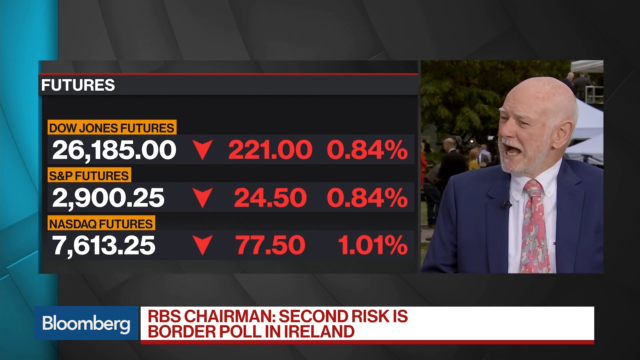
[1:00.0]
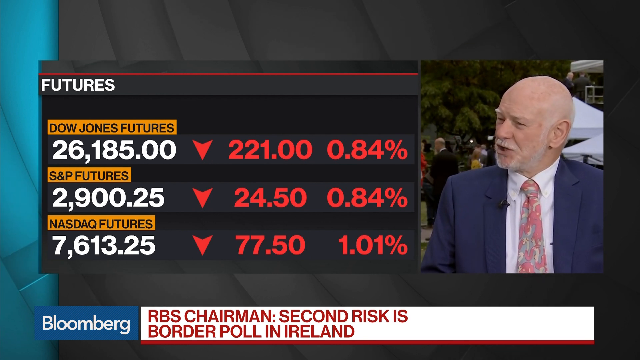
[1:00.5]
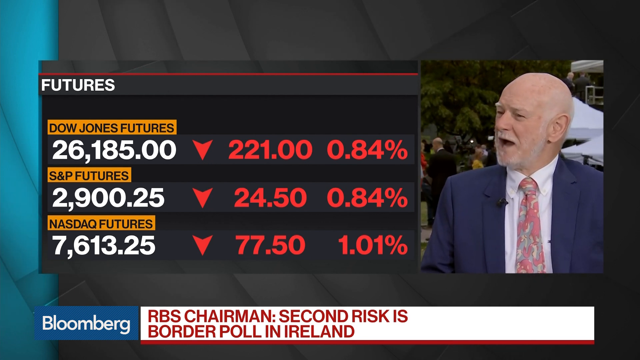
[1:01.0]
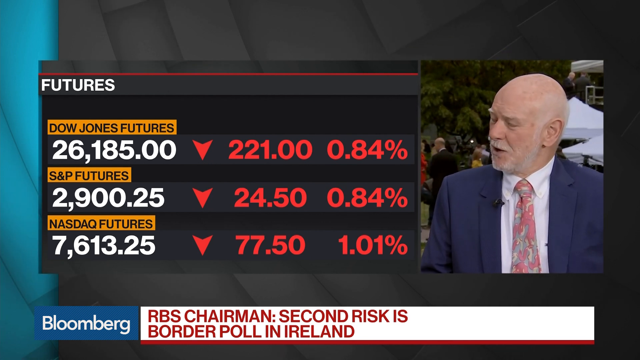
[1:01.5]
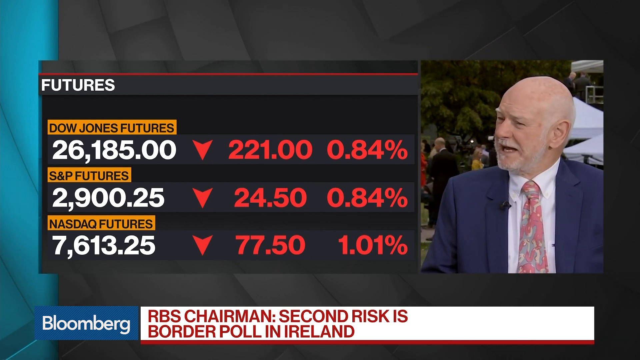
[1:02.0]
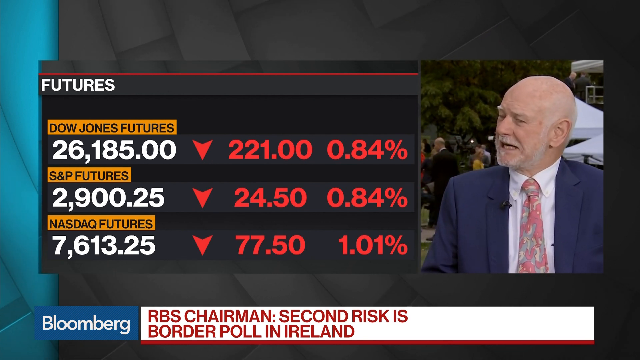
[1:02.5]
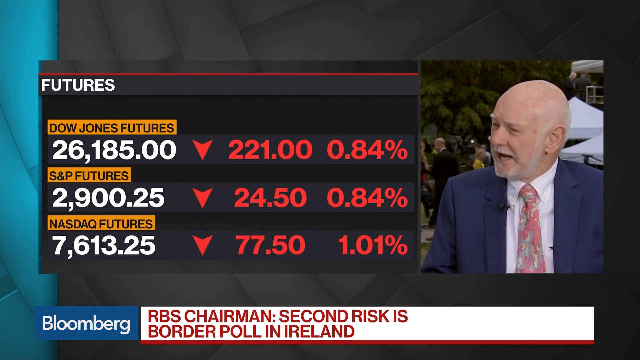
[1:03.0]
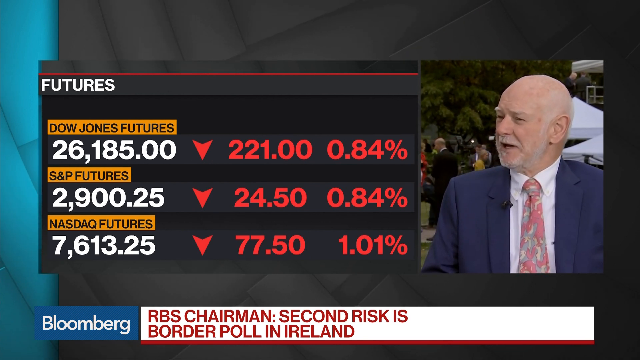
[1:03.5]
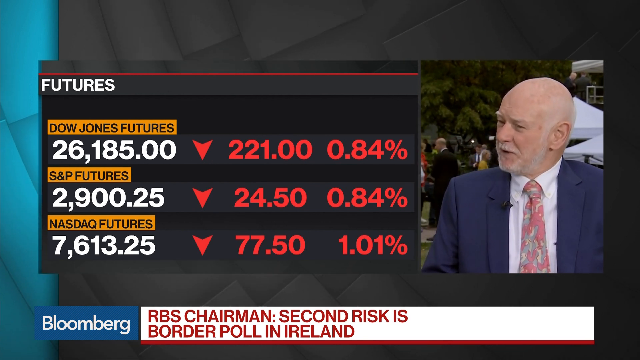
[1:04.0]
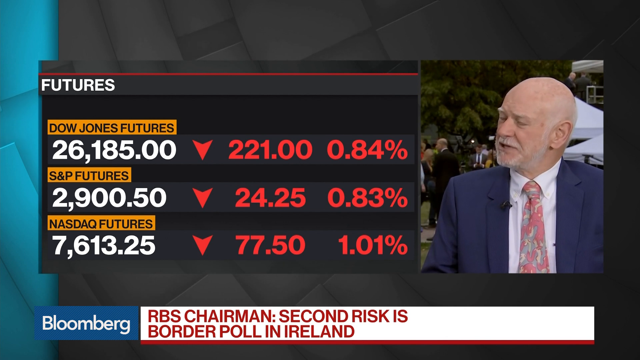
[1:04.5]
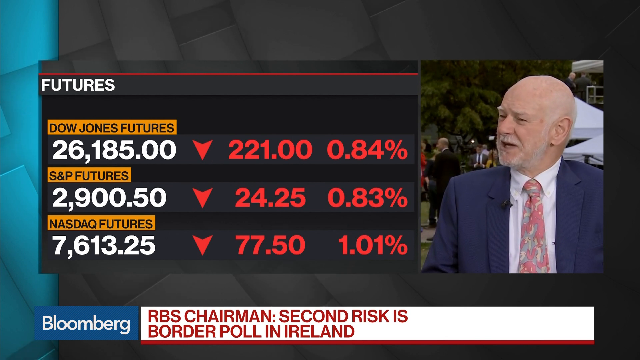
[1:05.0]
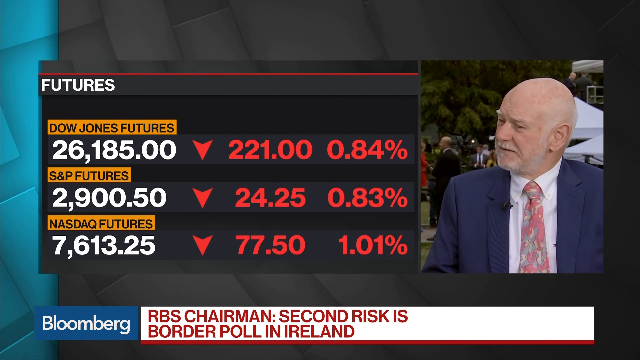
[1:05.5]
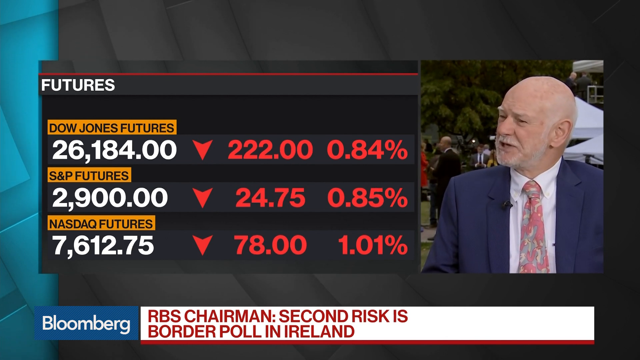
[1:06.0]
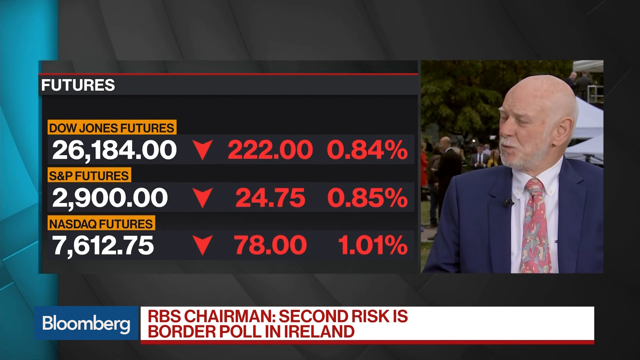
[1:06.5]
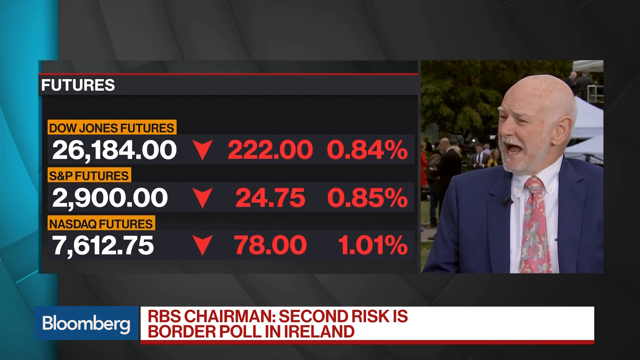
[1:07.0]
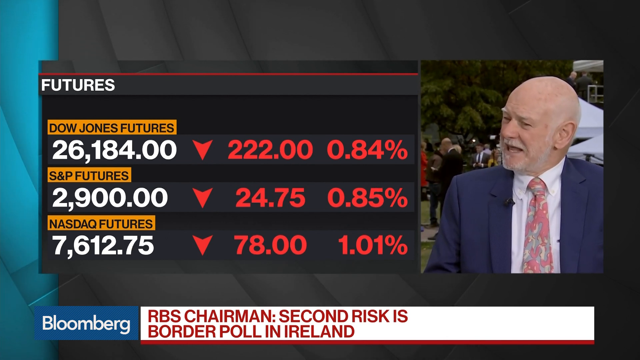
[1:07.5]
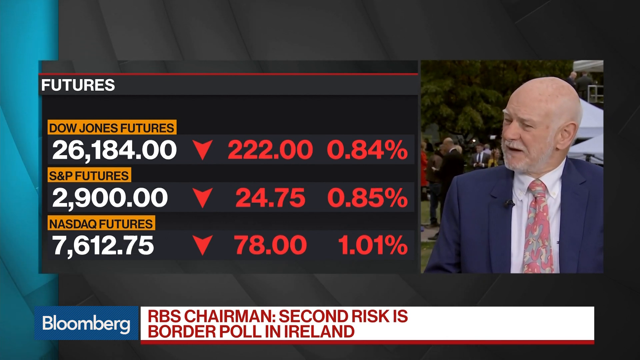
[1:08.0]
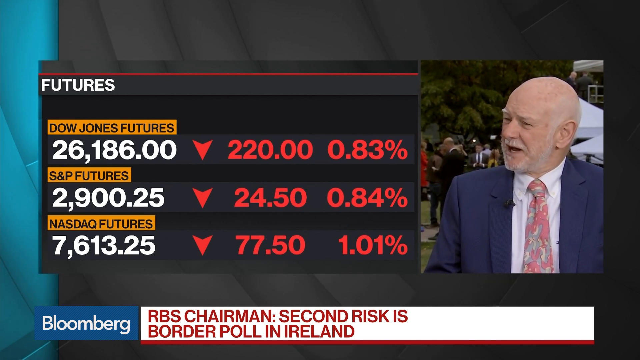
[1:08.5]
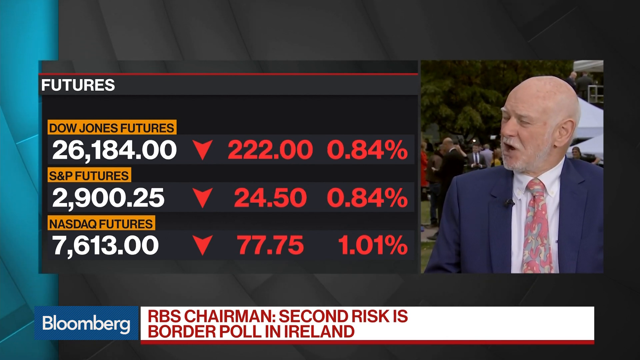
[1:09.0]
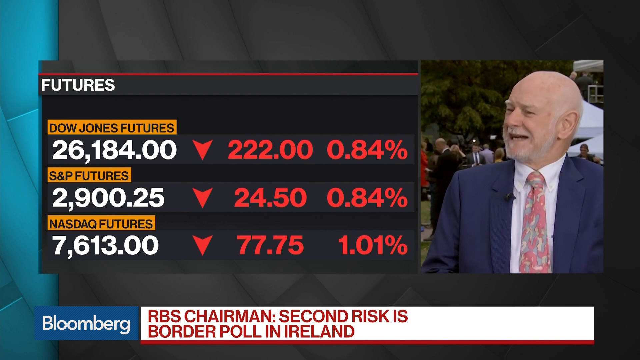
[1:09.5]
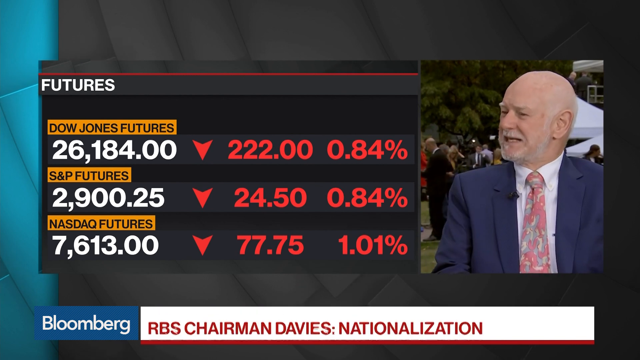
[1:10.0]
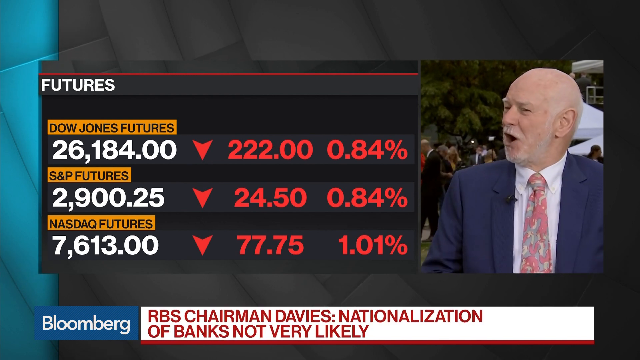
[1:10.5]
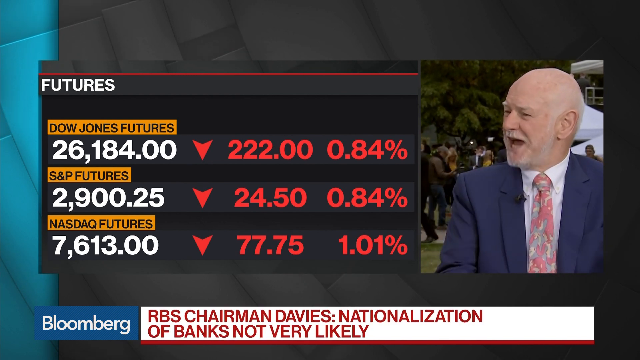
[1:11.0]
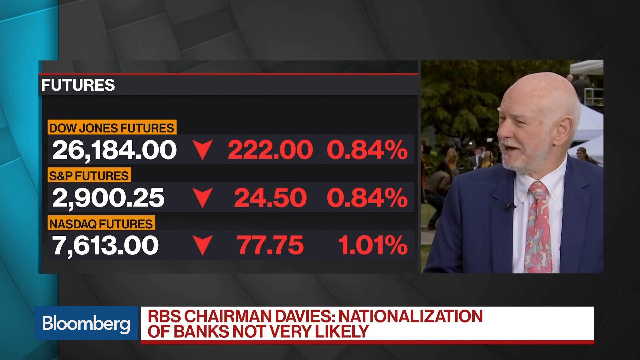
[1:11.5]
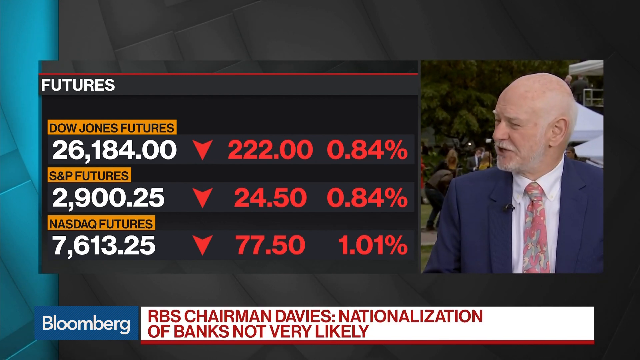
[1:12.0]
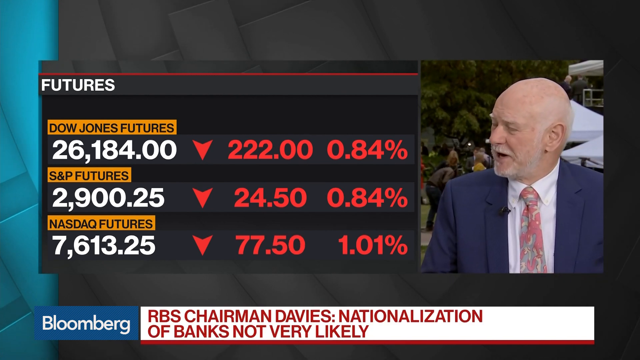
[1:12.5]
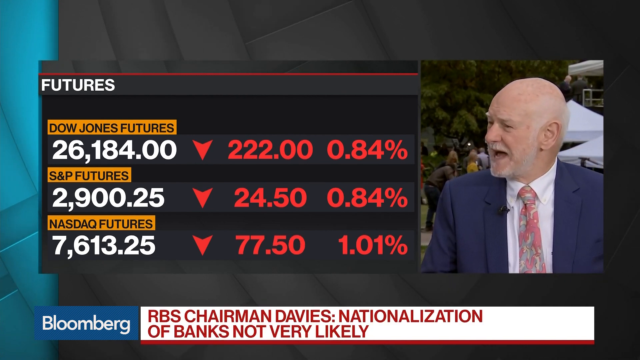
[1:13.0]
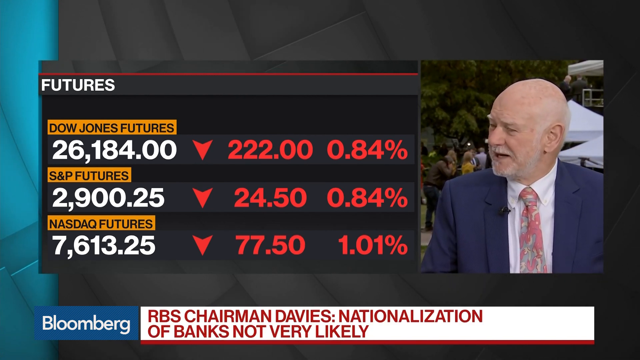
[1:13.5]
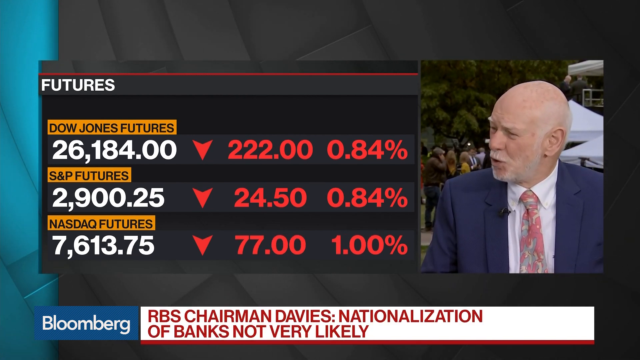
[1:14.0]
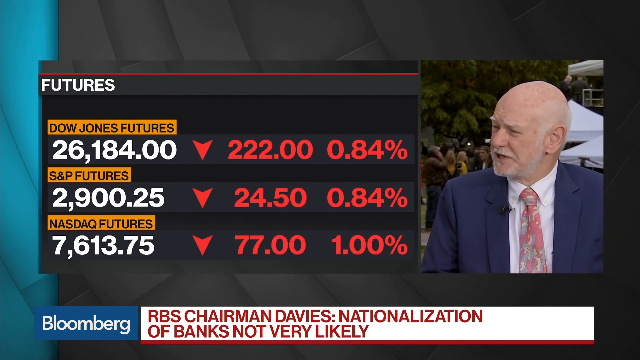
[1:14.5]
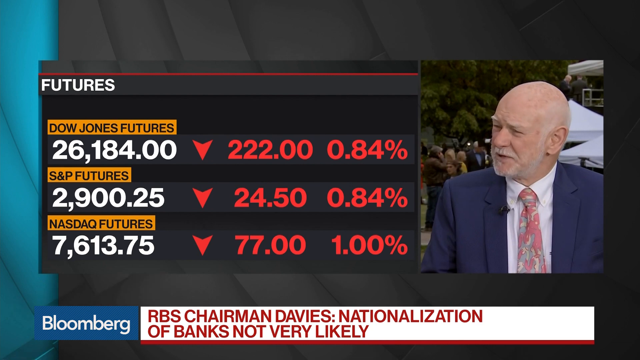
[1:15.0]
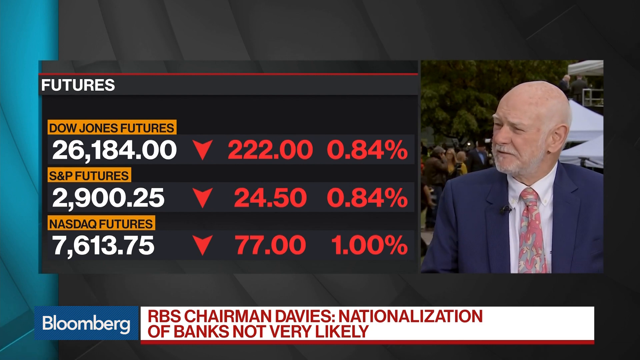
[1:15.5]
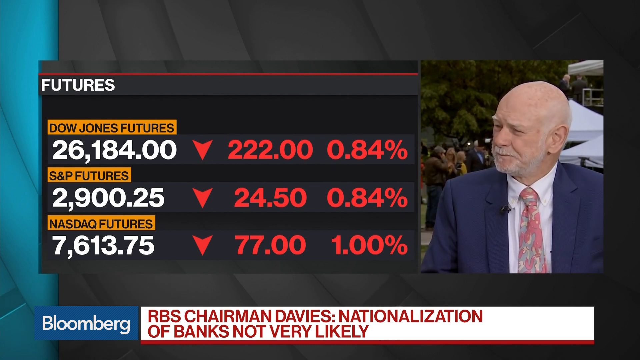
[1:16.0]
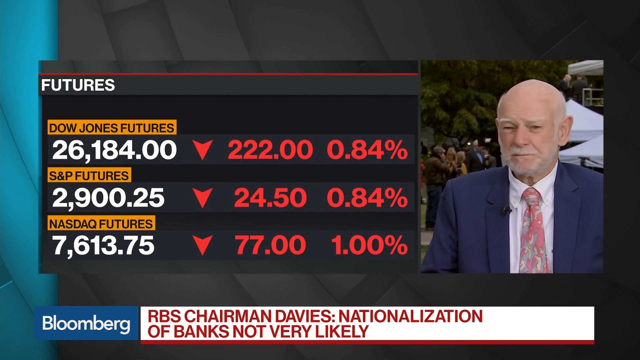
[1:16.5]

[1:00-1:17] An arrow is still red and going down, with Dow Jones futures, S&P futures and NASDAQ futures listed. Text about the RBS Chairman says the nationalization of banks is not very likely. The female news presenter is presenting; behind her are flags of a country and a place with burglary gates, like a park, with a very tall building behind it and people passing by, coming and going. Text then reads that, according to the RBS Chairman, the second risk is the border rule in Ireland. The female reporter and the man are both discussing with each other. The report switches between futures and intraday: the futures figures are negative, with red arrows going down, while the intraday figures are green with arrows facing up.